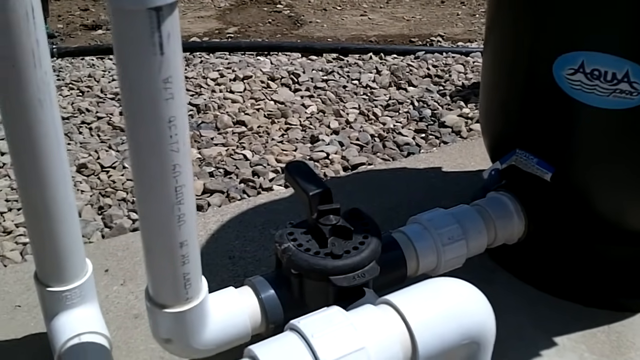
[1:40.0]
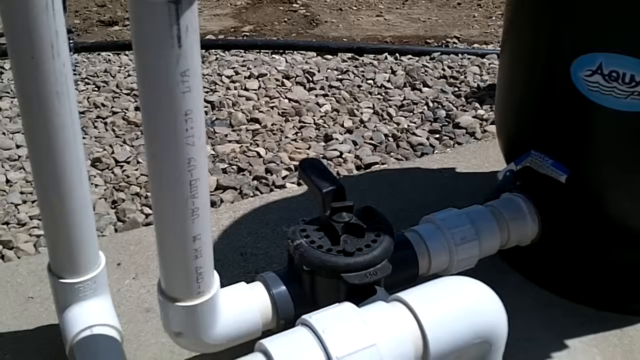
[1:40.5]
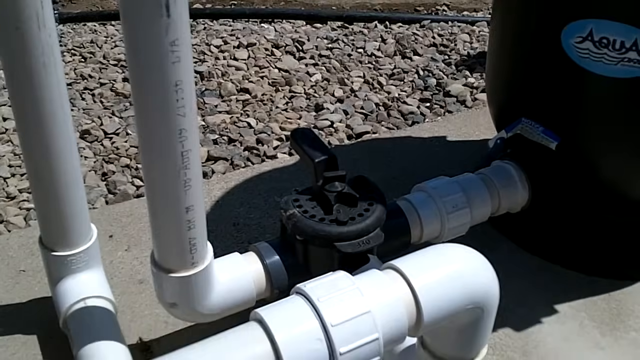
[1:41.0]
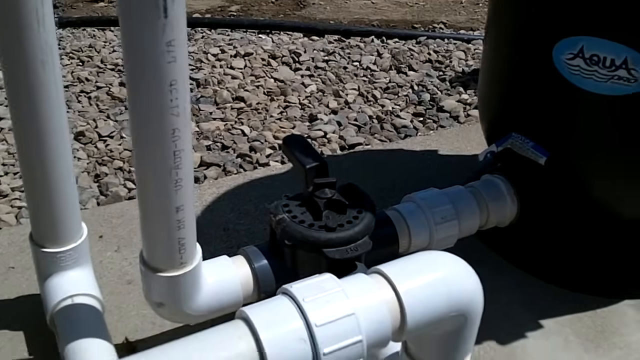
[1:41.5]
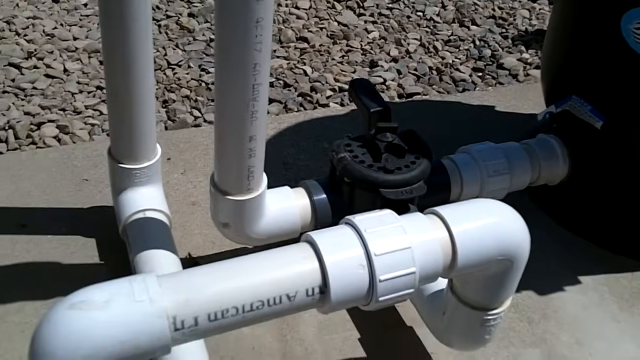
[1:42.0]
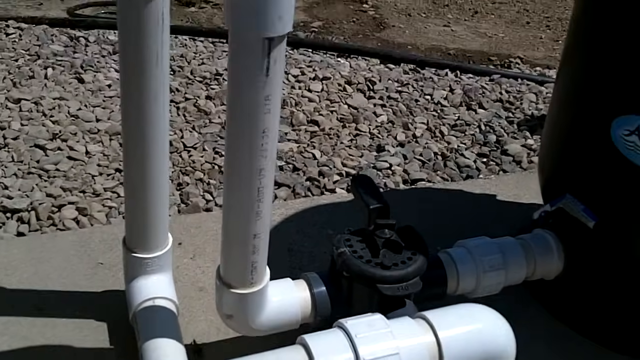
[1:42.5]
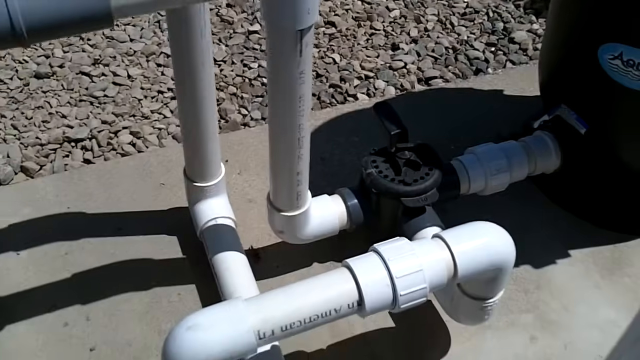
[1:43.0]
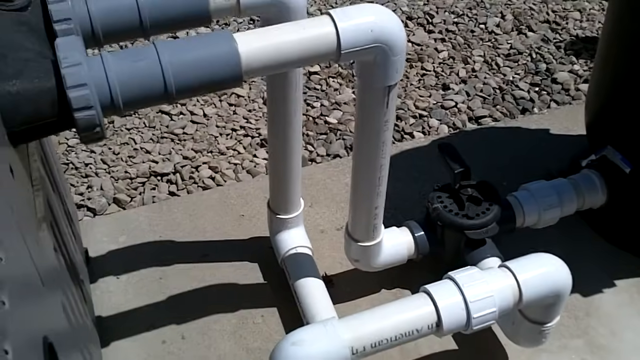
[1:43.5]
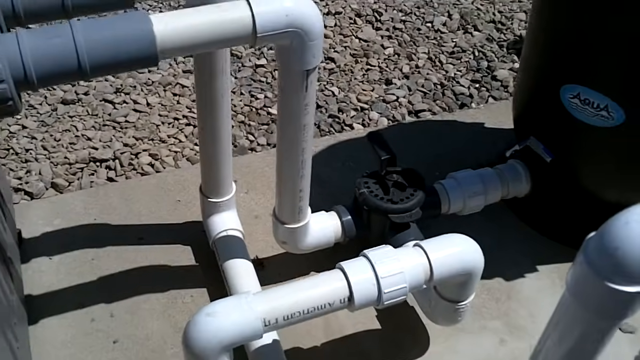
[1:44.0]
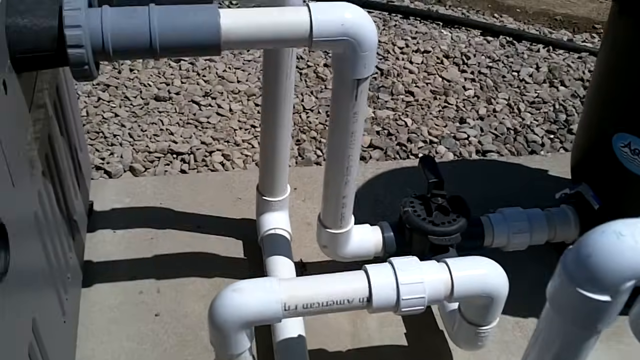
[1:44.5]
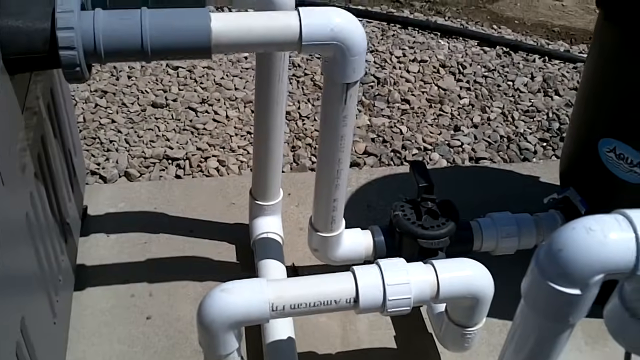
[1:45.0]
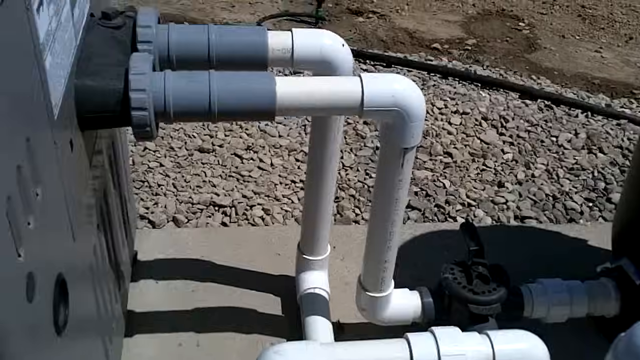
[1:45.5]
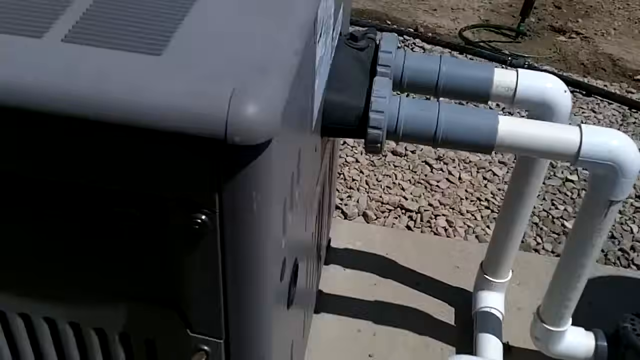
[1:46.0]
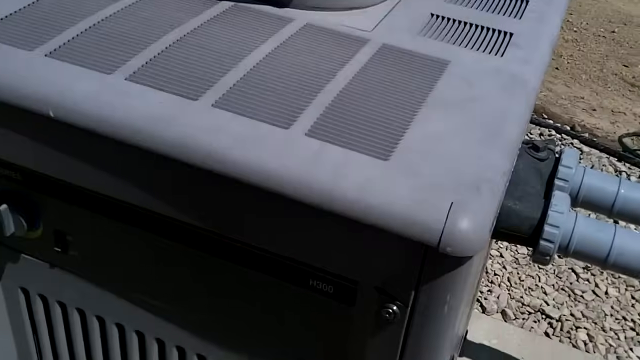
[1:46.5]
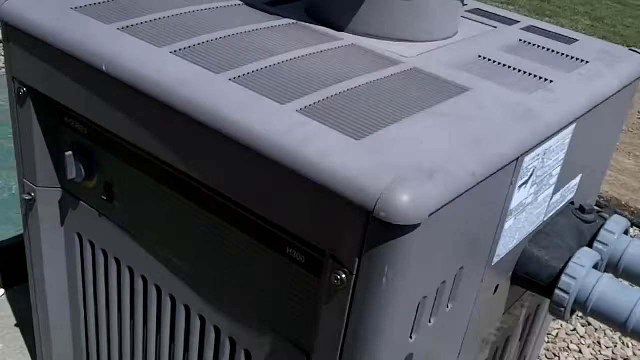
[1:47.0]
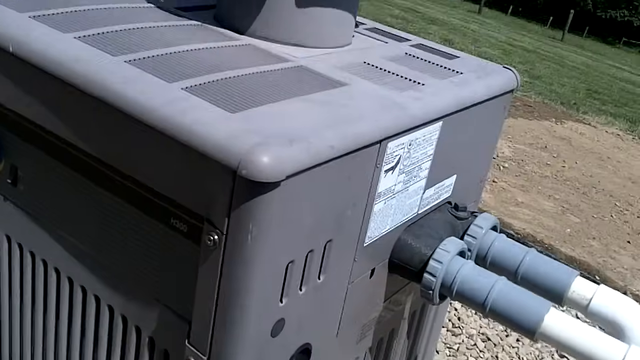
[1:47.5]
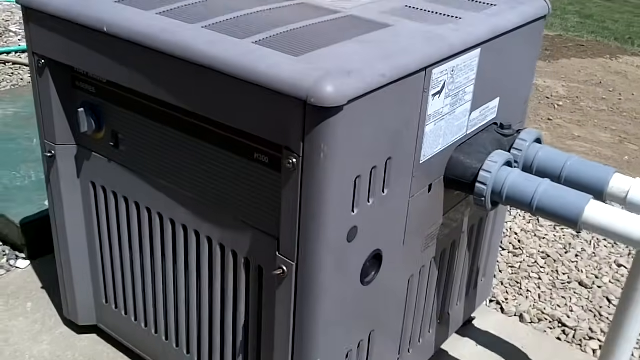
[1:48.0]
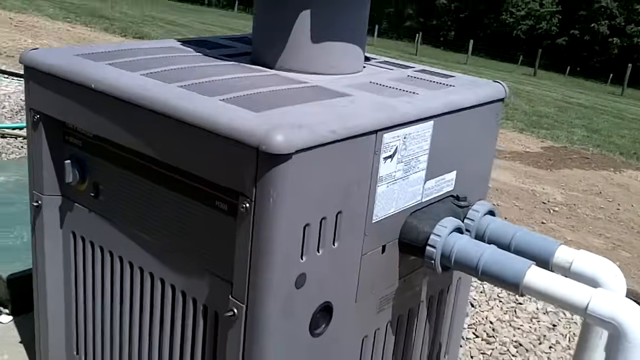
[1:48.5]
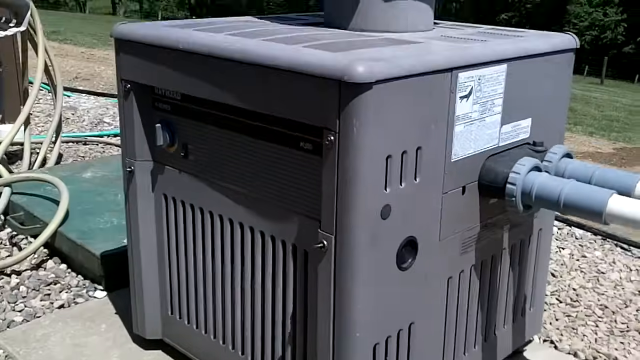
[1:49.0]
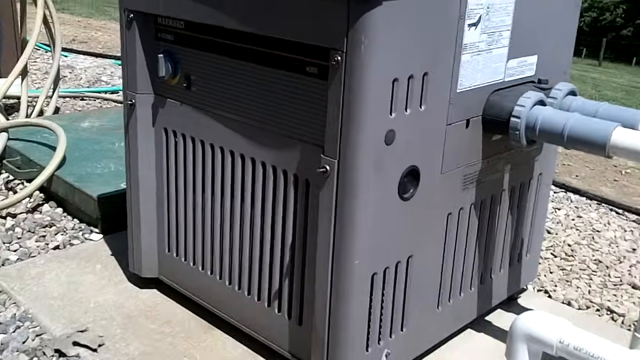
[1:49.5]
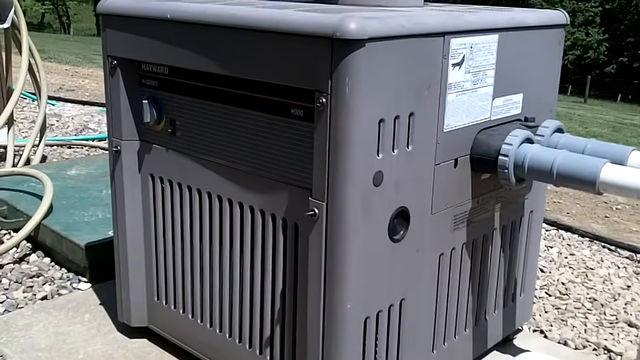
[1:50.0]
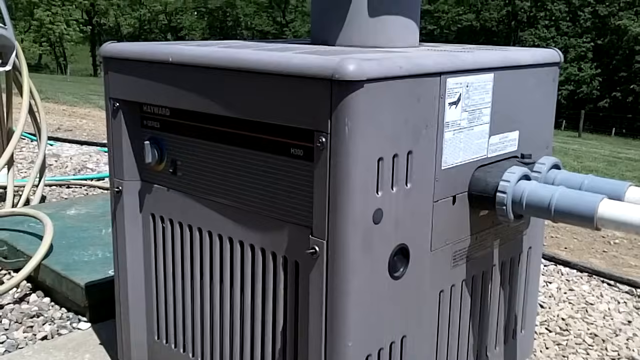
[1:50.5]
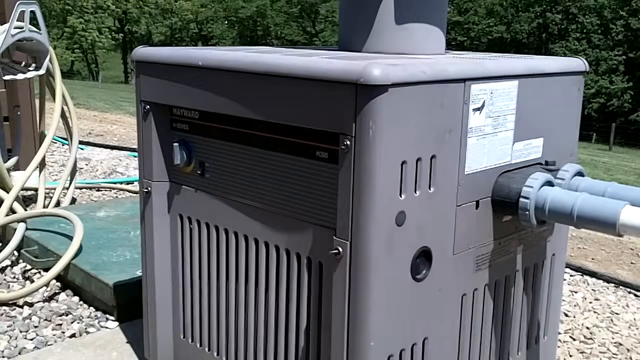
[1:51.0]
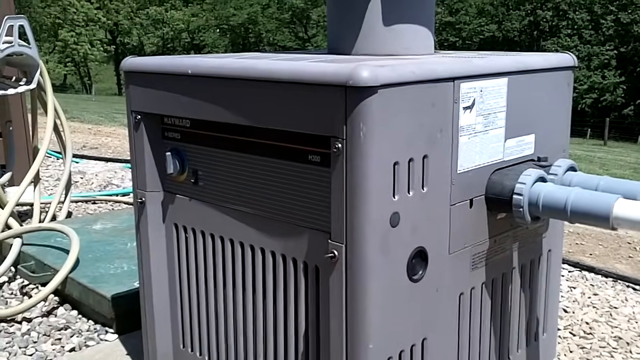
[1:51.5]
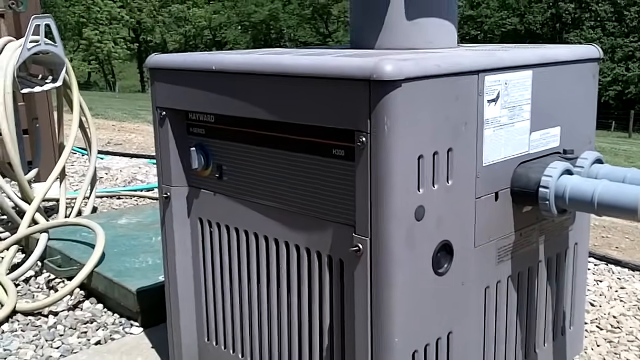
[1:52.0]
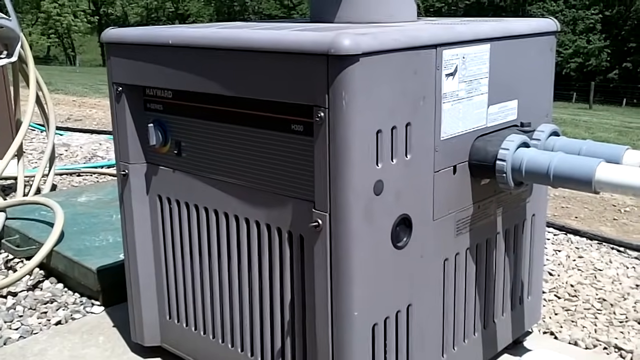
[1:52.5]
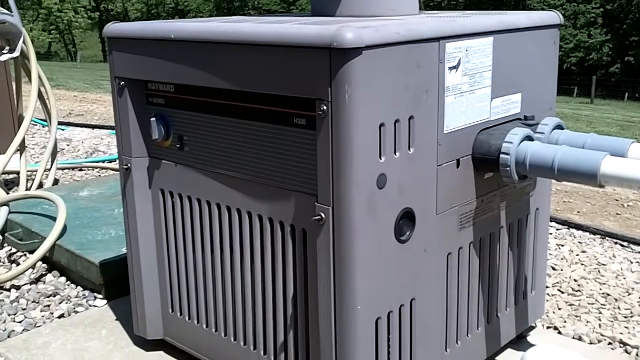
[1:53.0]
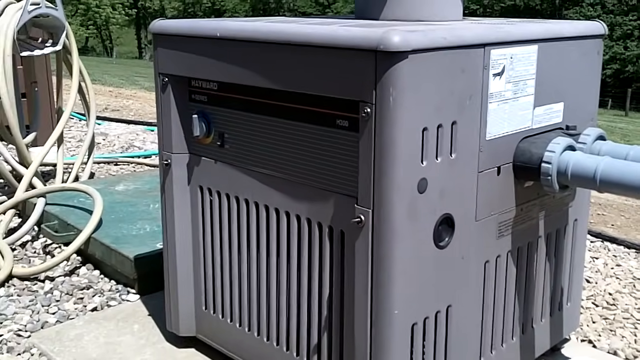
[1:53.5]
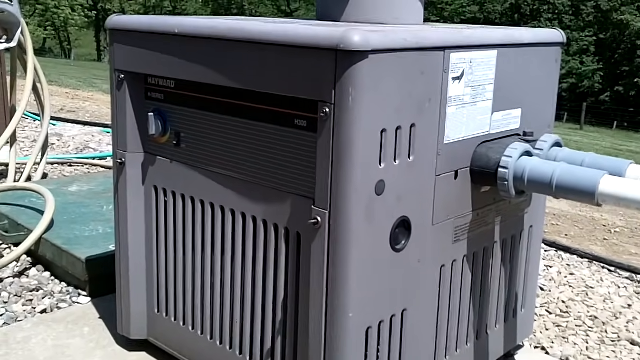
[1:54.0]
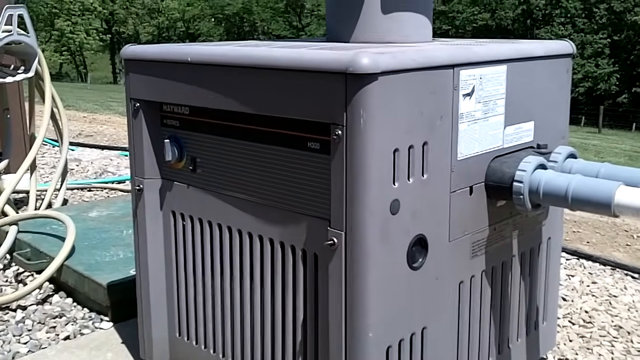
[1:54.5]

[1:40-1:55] There is another zoom in on the black levering. Moving to the left, the view shows what looks almost like an air conditioner: a big gray boxy apparatus with more tubing coming out of it, venting on top and on the side, and on the back a couple of white stickers with detailed information that is impossible to make out. In the background are a green platform and a lot of hoses, what looks like a garden hose, specifically a beige hose and a green hose. The gray box is connected by what looks like two white tubes with gray coloring on the ends, and the tubing looks very sturdy. It is bolted in by what looks like a black tarpaulin over the top.